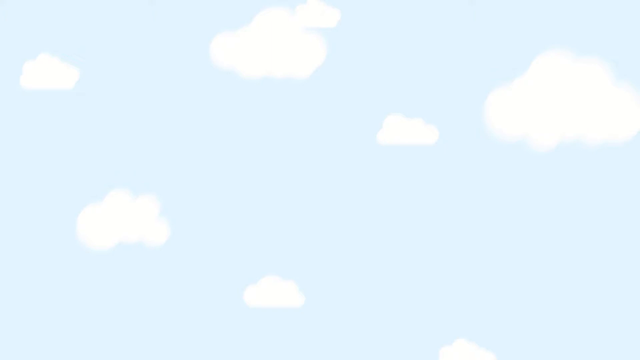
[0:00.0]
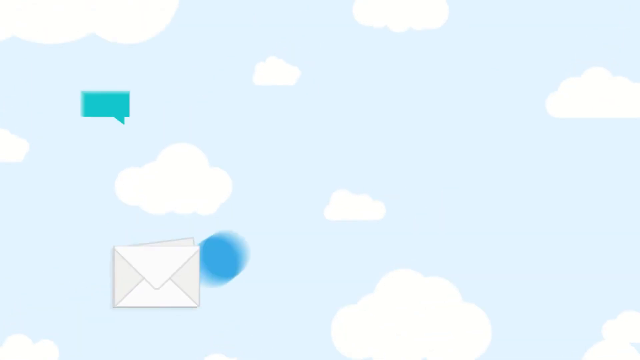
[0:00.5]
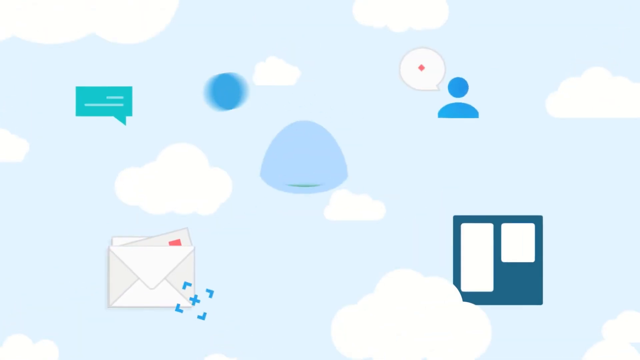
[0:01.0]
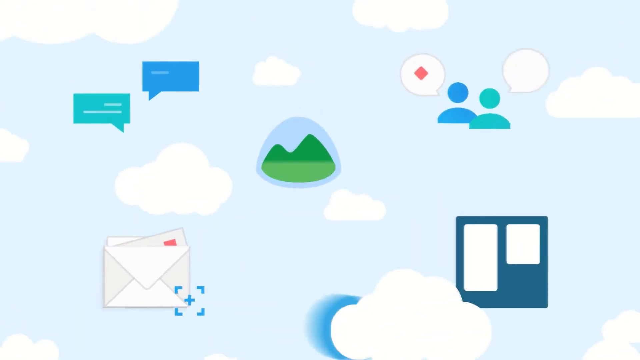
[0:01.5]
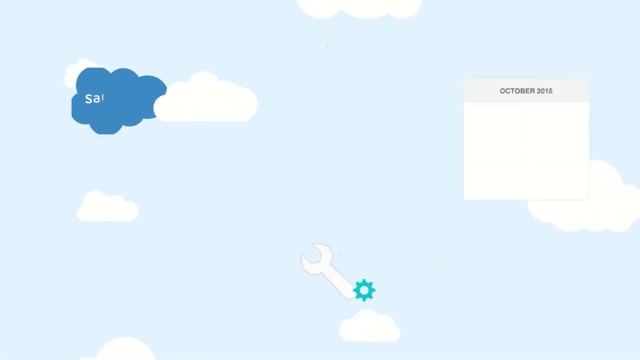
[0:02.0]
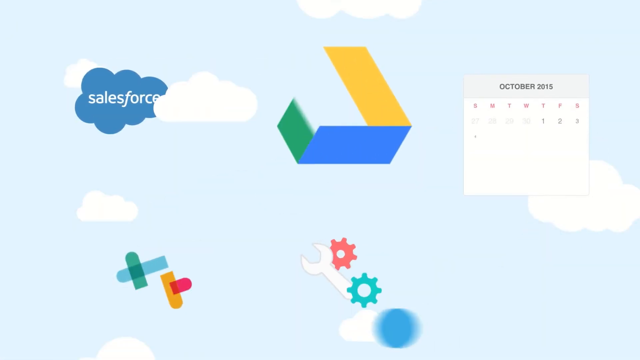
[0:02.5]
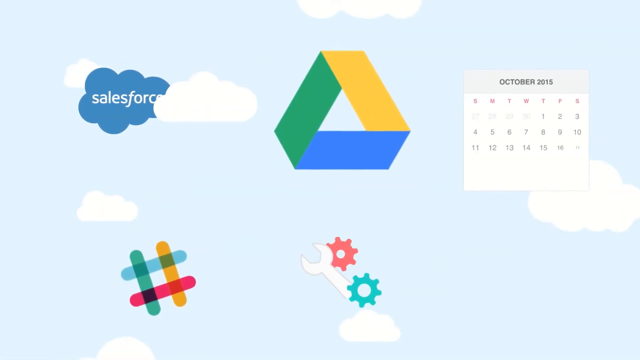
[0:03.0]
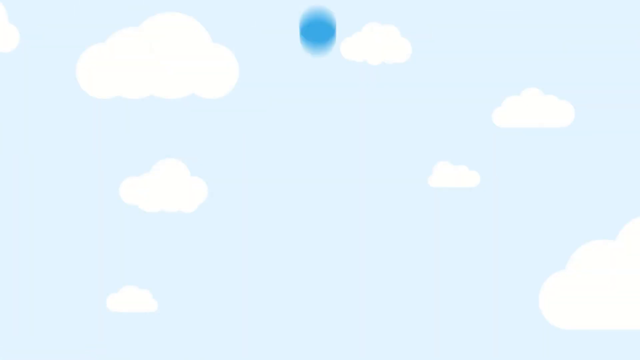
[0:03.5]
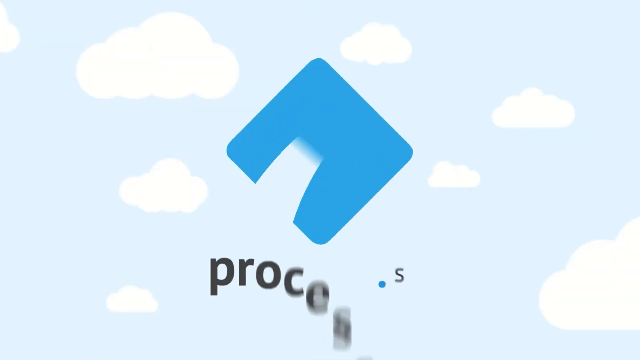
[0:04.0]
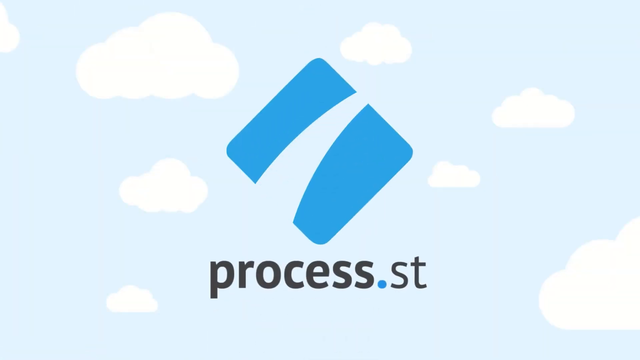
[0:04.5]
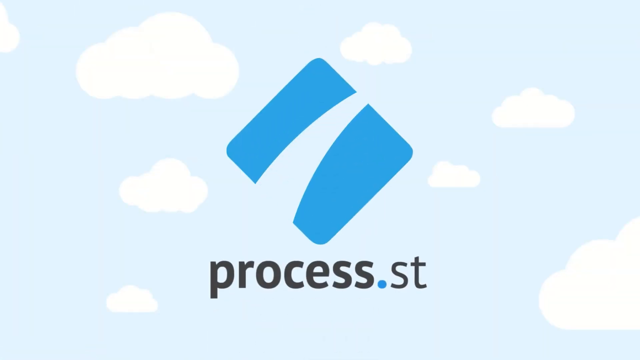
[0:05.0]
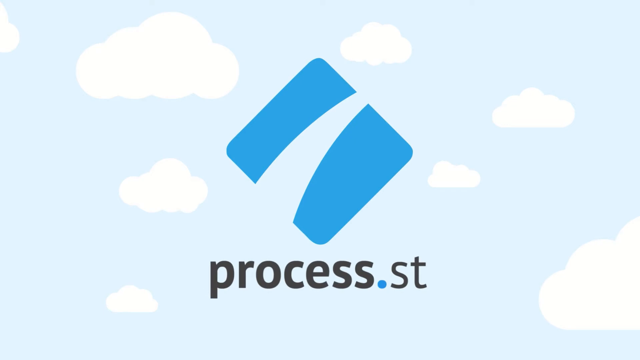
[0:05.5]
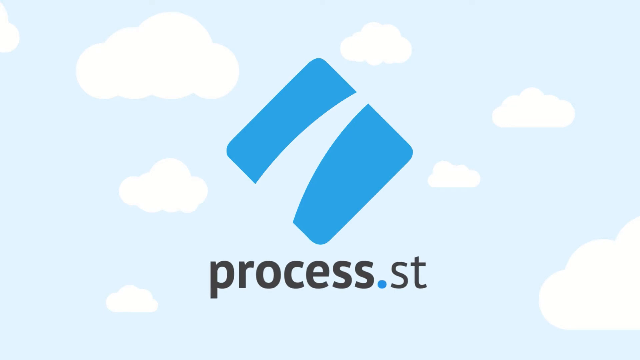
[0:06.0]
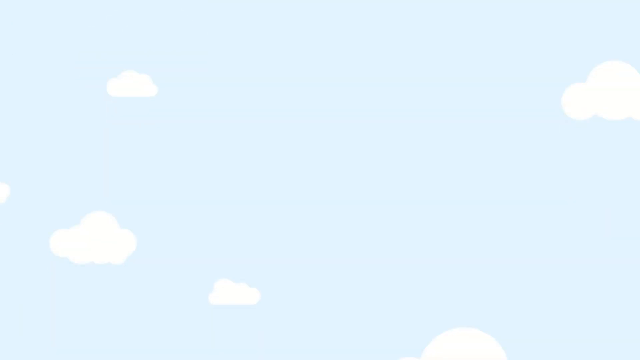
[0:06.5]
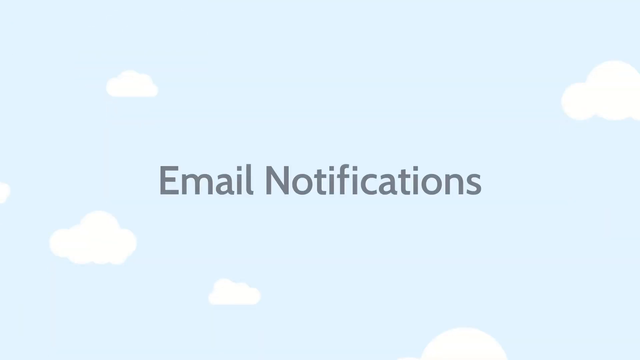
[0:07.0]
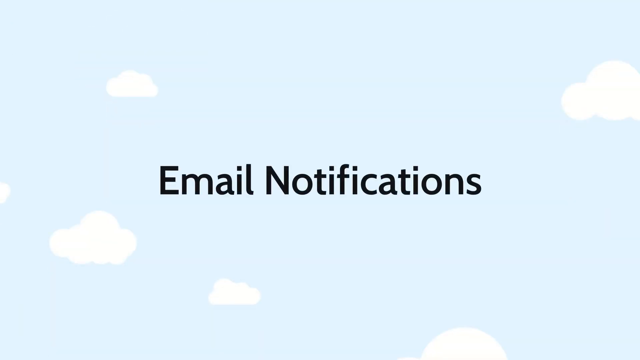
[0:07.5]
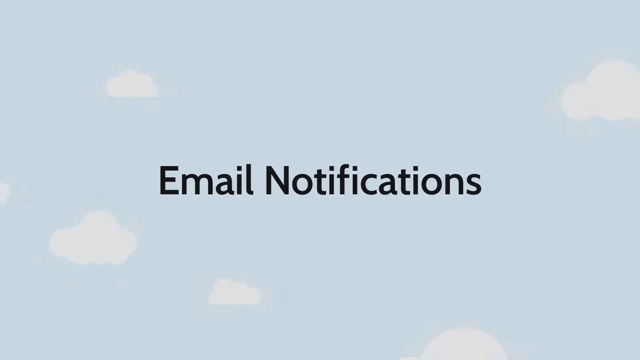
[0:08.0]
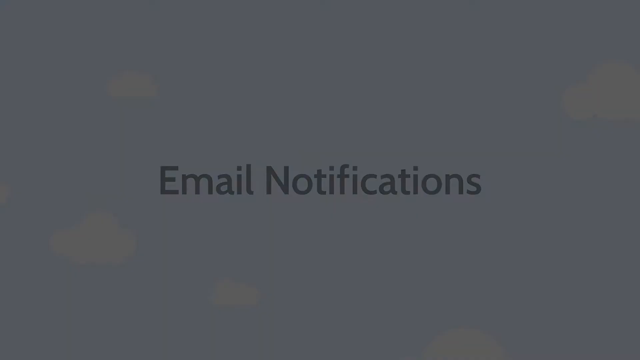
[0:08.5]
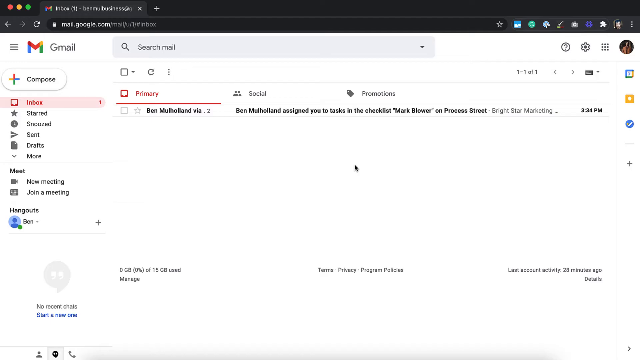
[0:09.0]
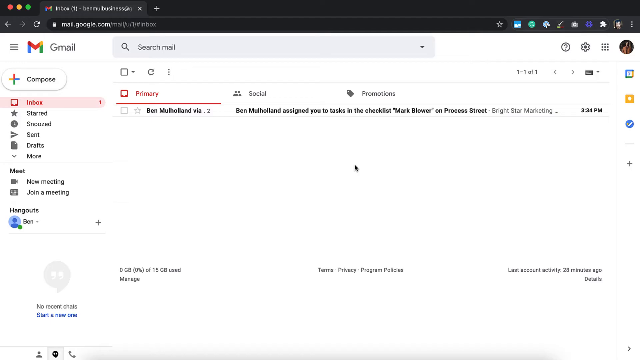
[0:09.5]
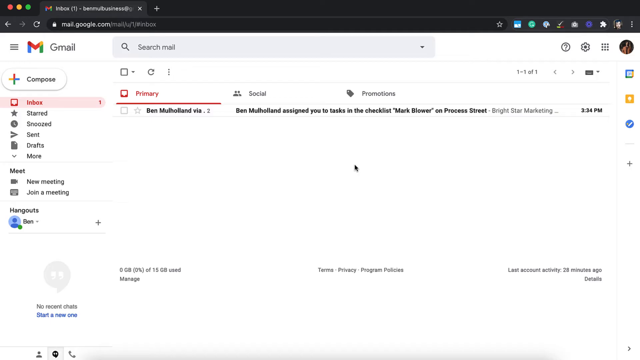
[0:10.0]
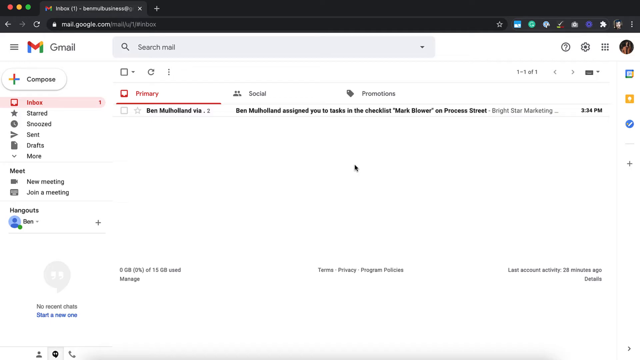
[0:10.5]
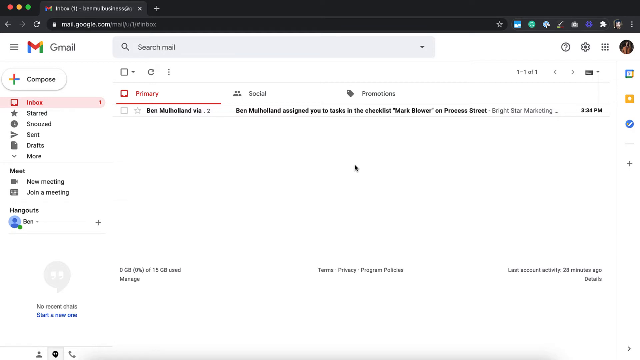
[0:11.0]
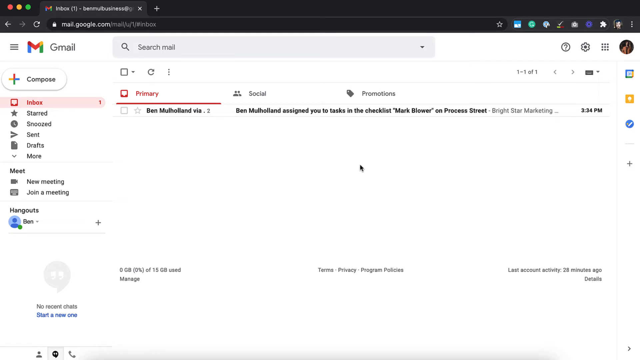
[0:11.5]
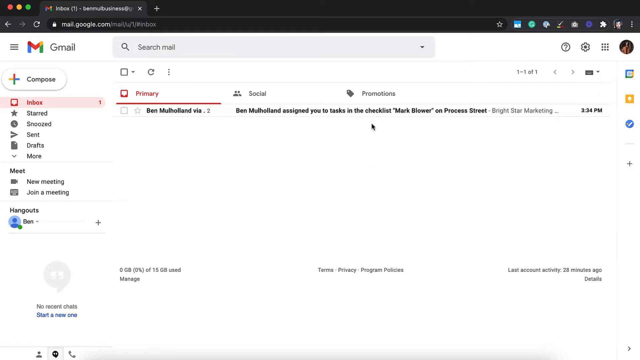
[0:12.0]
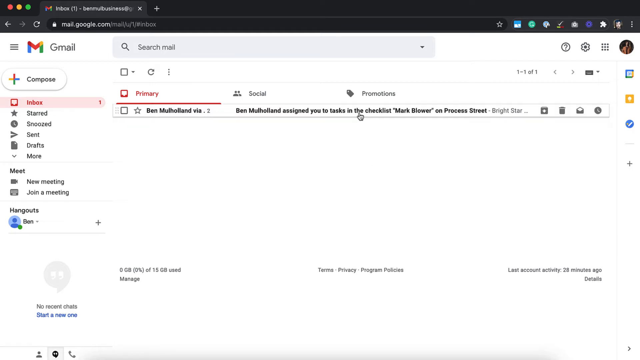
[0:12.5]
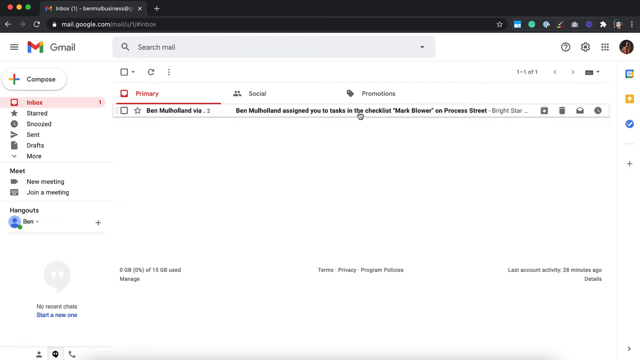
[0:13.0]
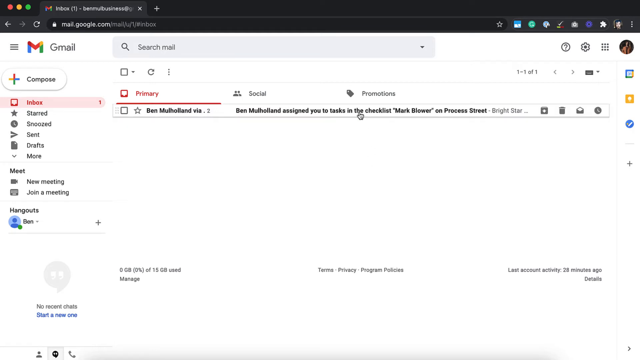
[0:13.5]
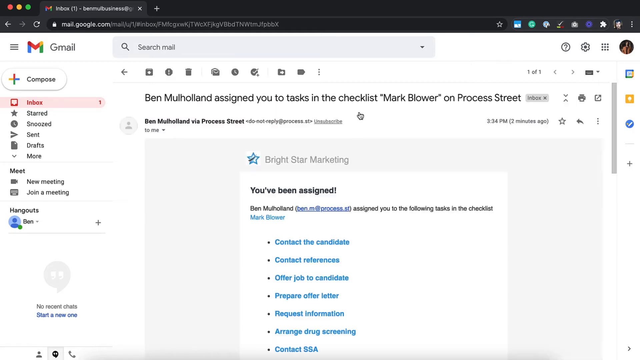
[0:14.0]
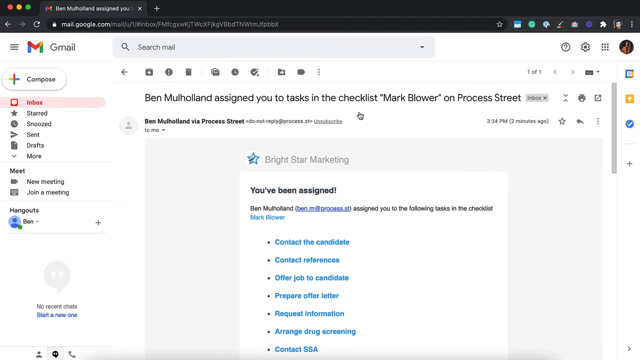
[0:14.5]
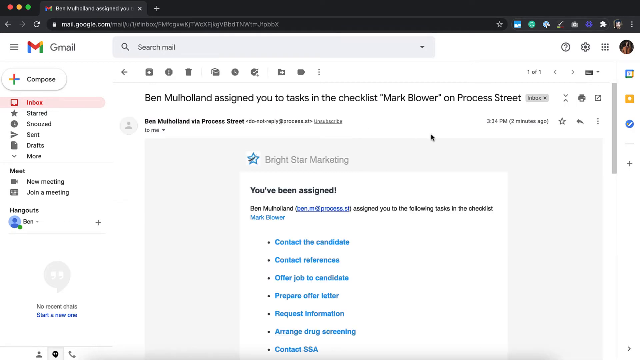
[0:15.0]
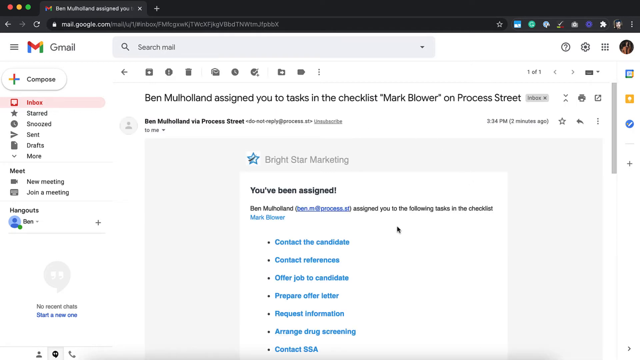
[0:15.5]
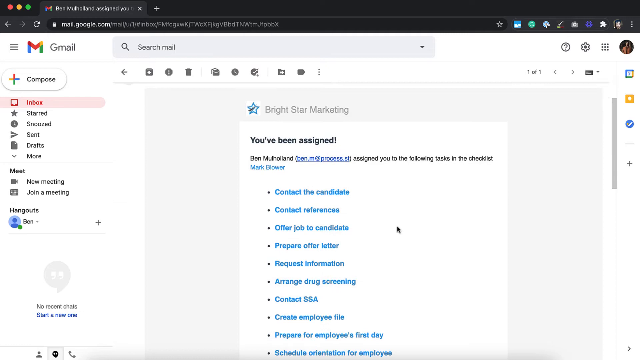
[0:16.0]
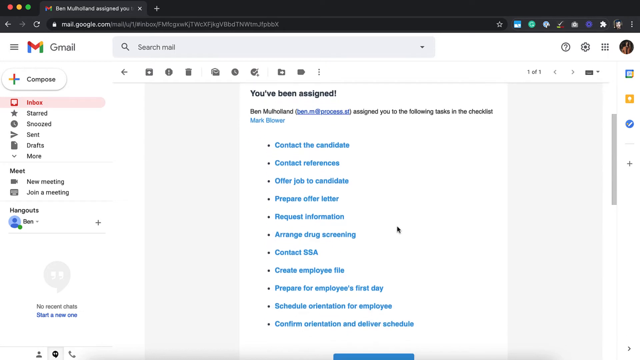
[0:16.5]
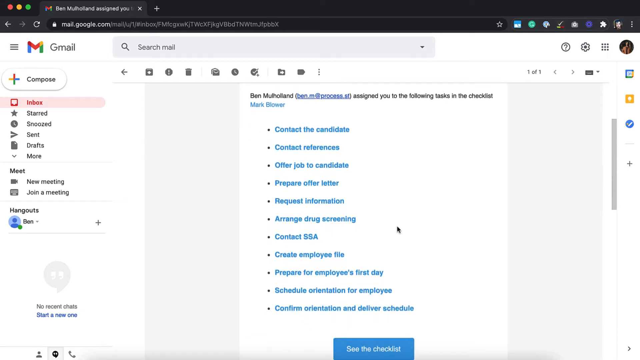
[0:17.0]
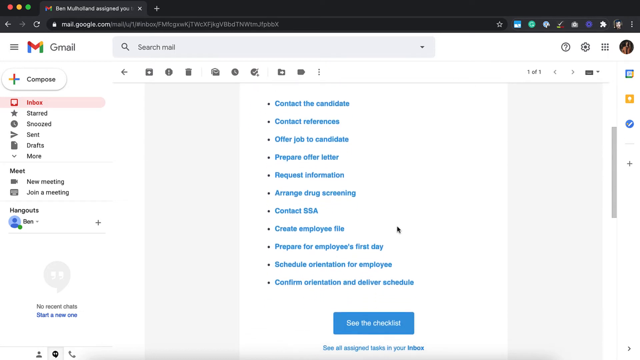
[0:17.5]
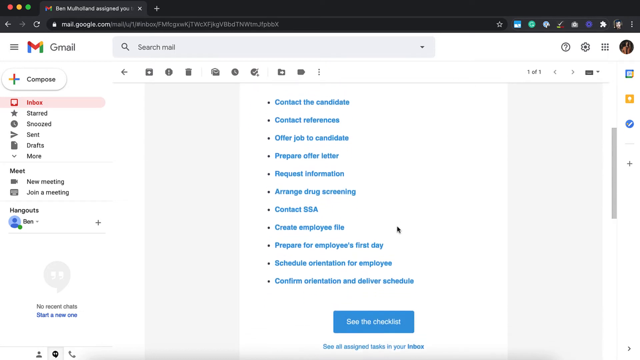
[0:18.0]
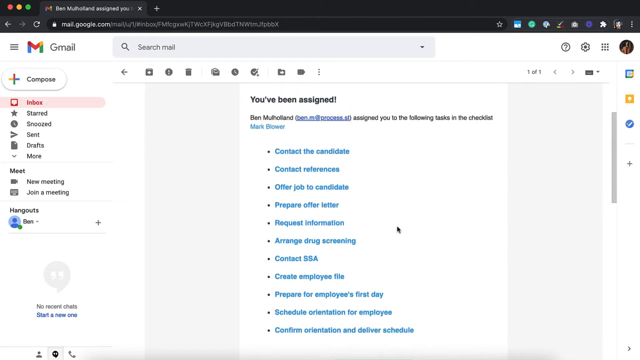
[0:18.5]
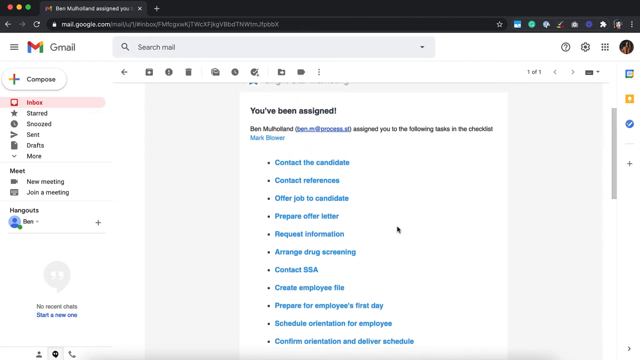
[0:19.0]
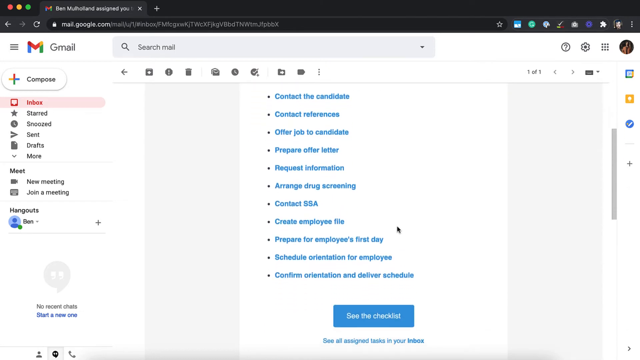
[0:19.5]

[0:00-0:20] A graphic of several different apps appears, including the Salesforce app, the Google Drive app and a calendar app. It ends on a logo, a blue square with a white line going through its center, with "process.st" written underneath. The video then changes to a Gmail inbox in a web browser. The person clicks on the first email, which is the only email in the inbox, and scrolls down the page through its contents. The title at the beginning of the email says "you've been assigned", followed by text giving a man's name and saying he "has been assigned you to the following tasks in the checklist". Below is a bullet point list, which is the checklist, and the person scrolls down the page looking at it. The video is probably an advertisement, apparently for an app related to email notifications.